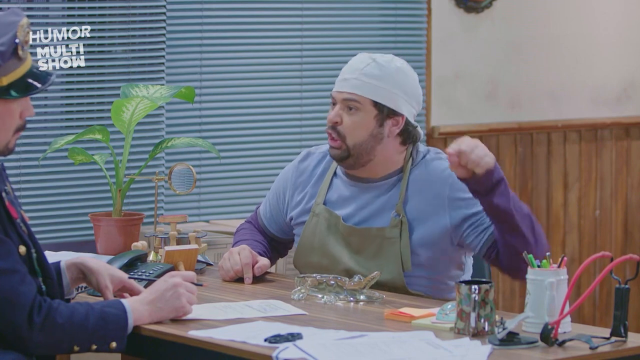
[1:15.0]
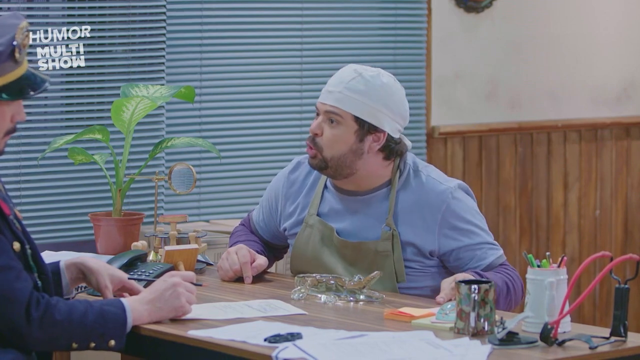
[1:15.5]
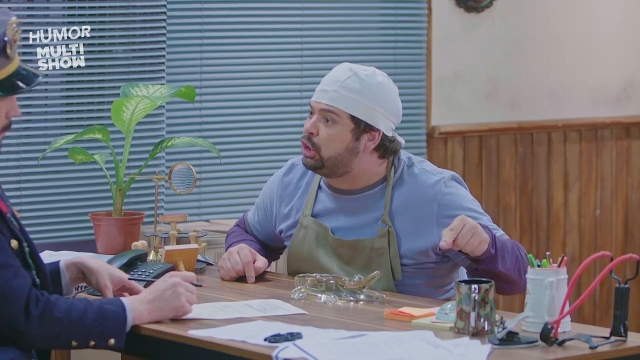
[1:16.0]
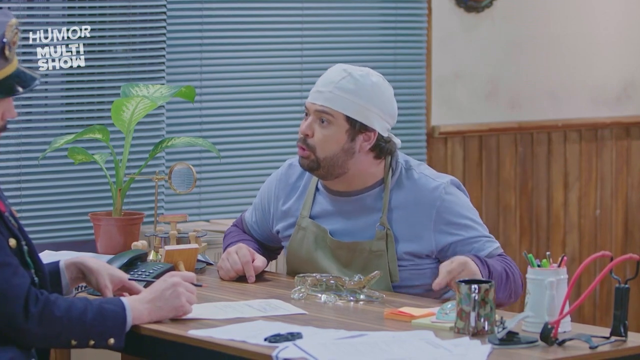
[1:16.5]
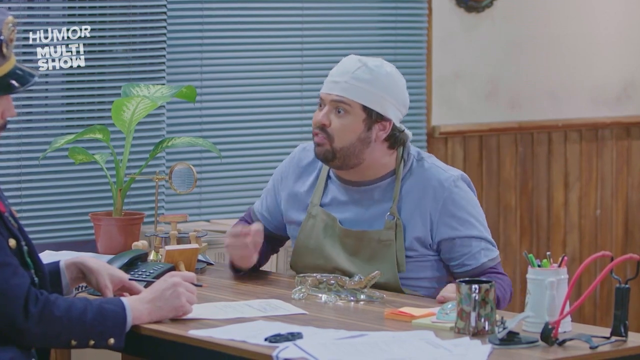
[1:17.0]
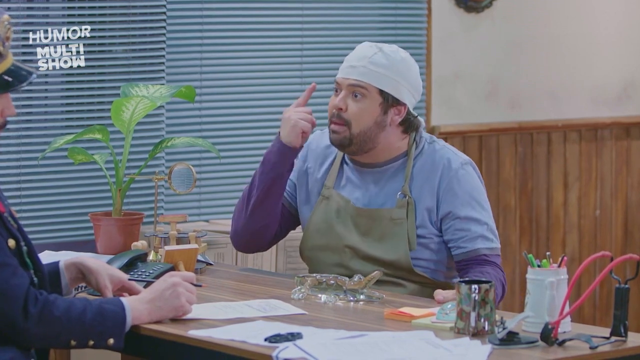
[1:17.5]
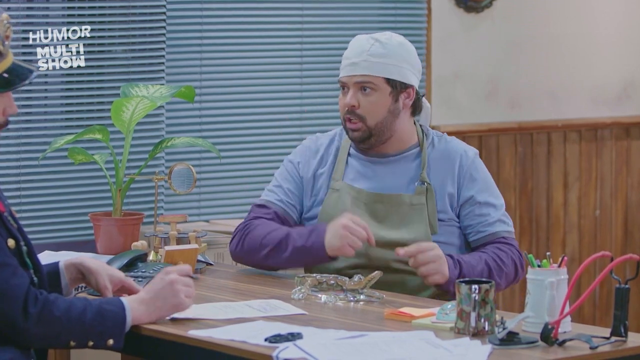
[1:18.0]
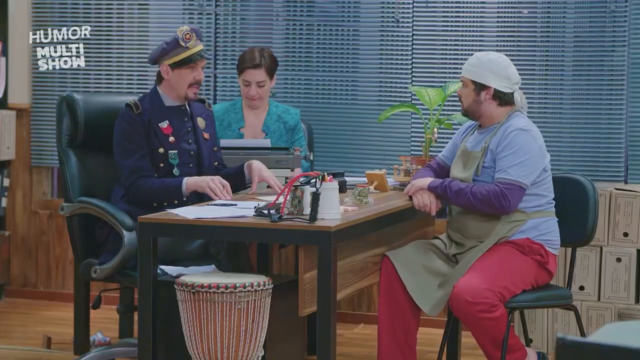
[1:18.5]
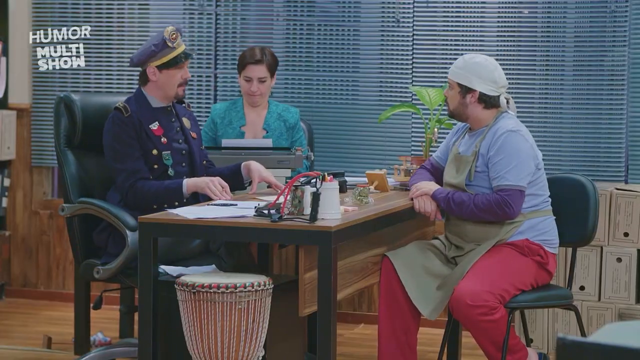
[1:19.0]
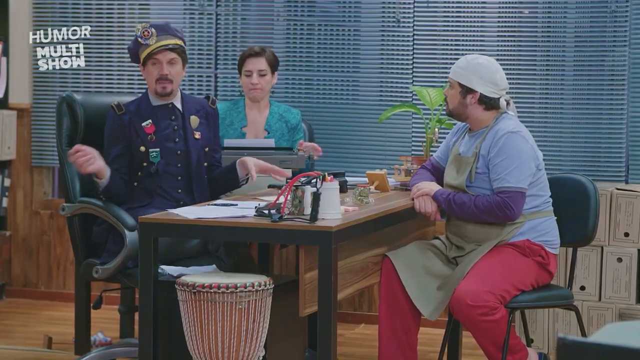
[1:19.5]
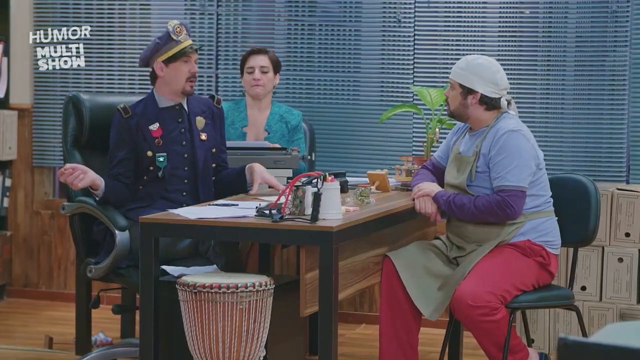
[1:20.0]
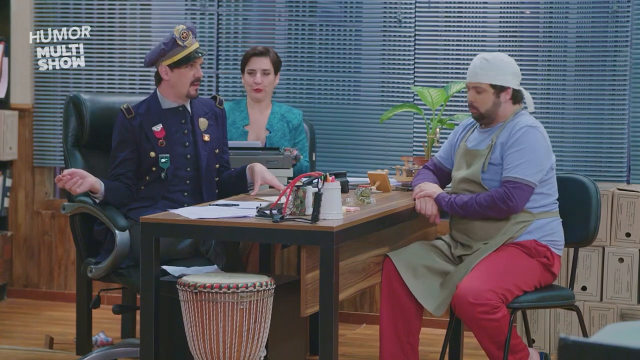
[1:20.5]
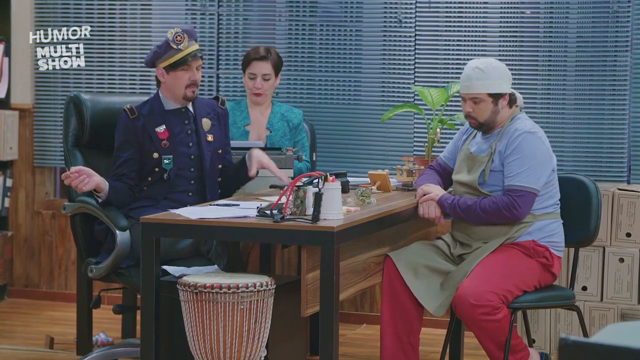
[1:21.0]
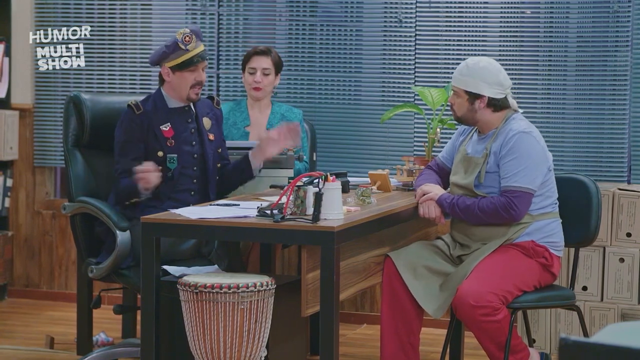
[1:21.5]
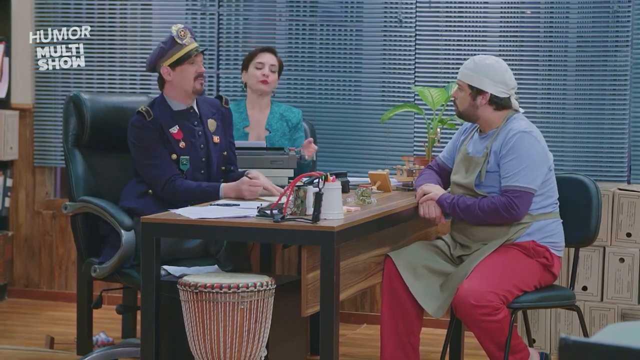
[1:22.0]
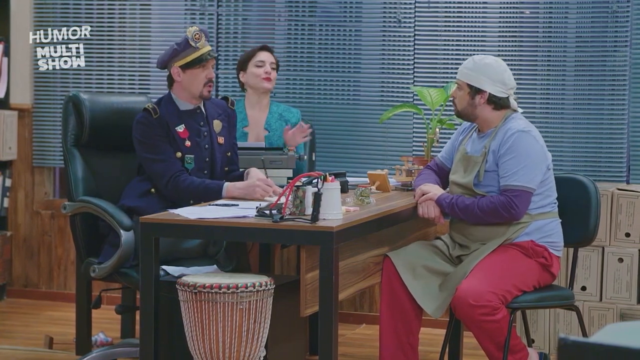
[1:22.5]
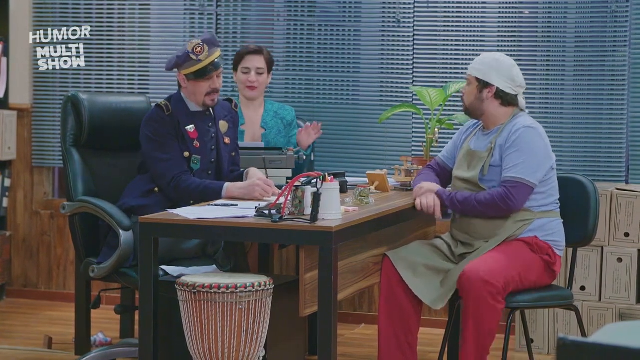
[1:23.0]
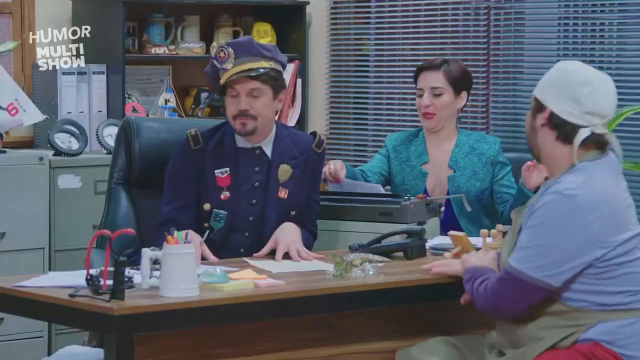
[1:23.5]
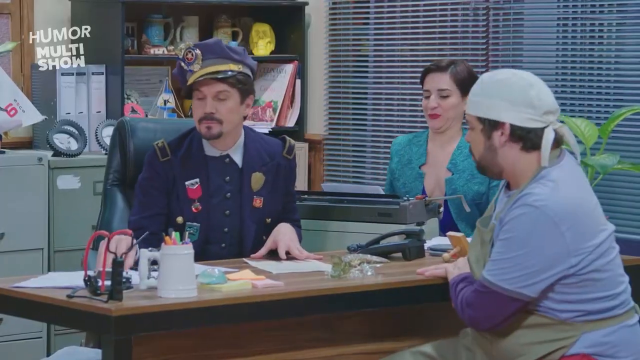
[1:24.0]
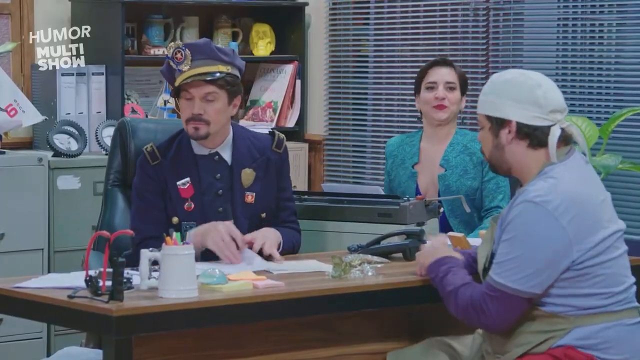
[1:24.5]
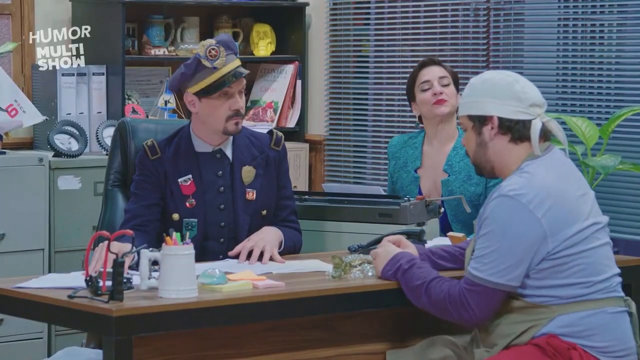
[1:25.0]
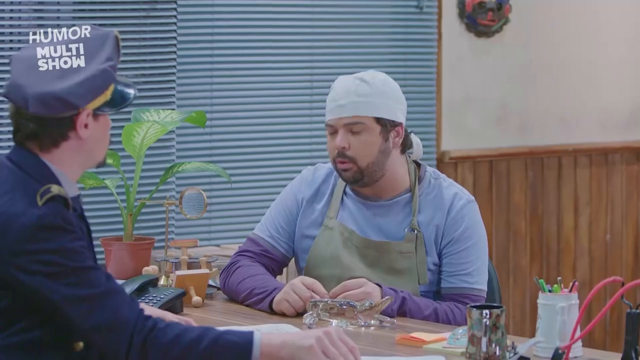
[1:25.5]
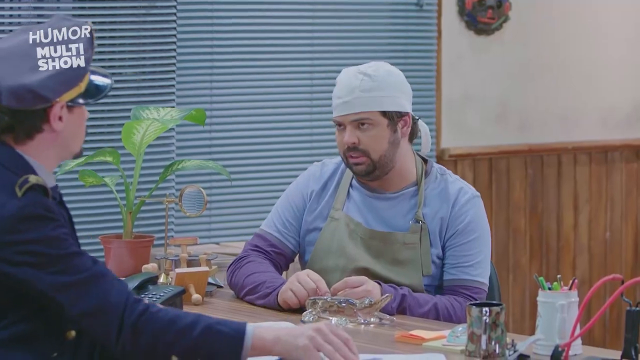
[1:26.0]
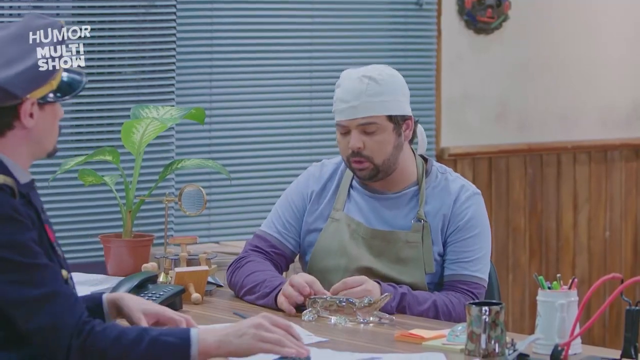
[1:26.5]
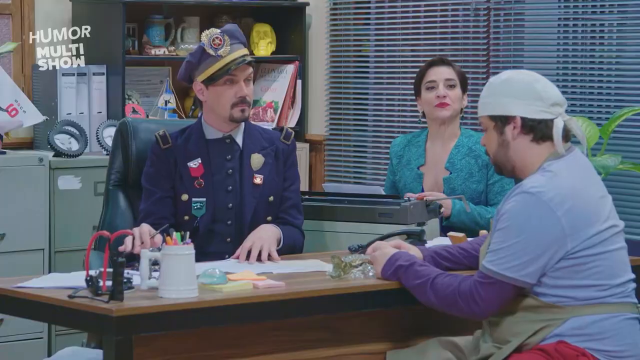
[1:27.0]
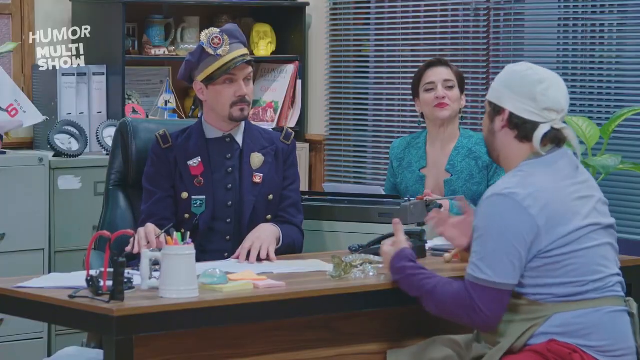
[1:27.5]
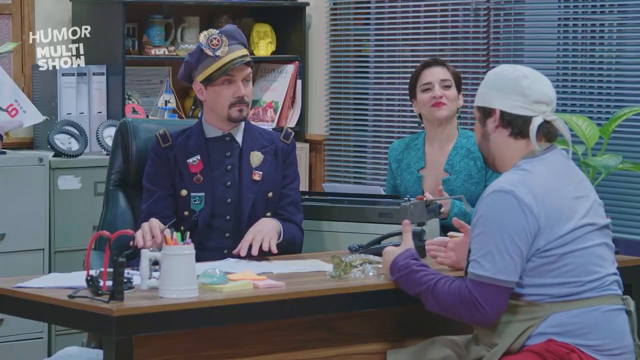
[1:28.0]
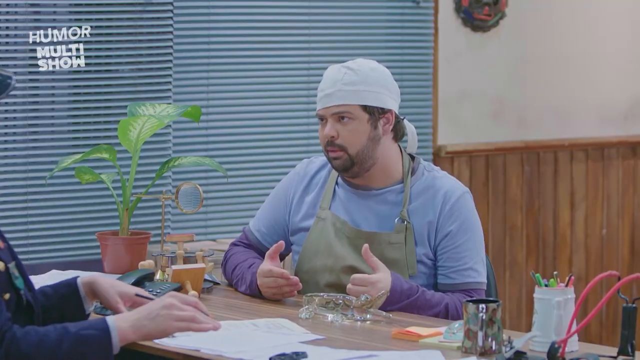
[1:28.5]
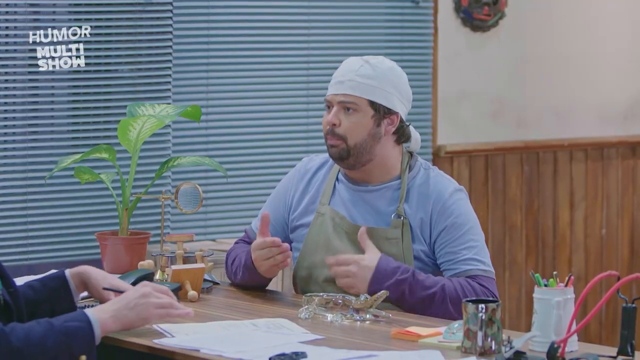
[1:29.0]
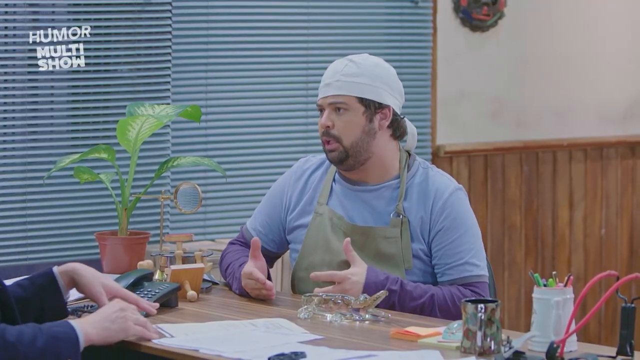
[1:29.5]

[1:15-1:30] The man in the surgeon's hat is still talking and fussing, pointing, then tries to calm down a little. The man in the military suit with medals still looks effeminate and moves paper around on the desk, perhaps trying to do some work, while listening. The lady at the side is still typing a few words on the old-fashioned typewriter while listening, and she talks occasionally. The military man wears his hat cocked to the side. There is a blue plant at the end of the table where they are sitting, and the blinds, which take up most of the wall, look partly open. The man in the surgeon's hat sits on a regular seat, and the military man sits in a regular office chair. The bongo is still there, and nobody has played it.